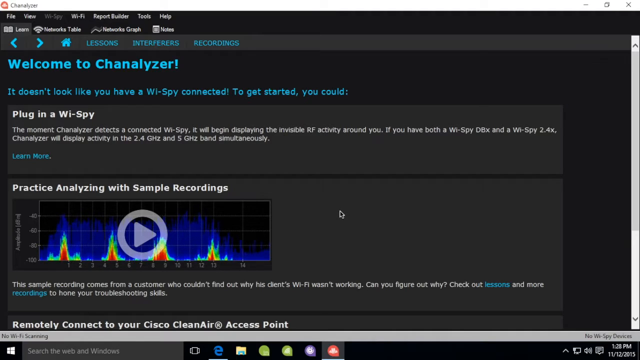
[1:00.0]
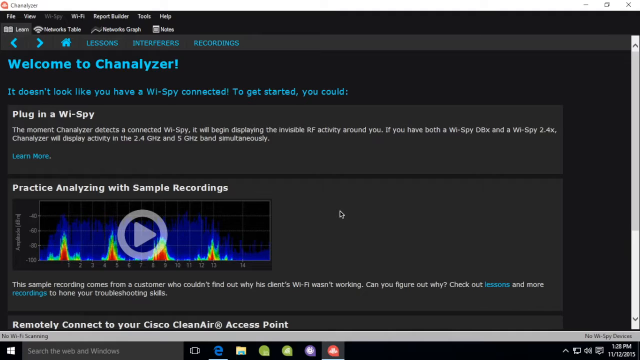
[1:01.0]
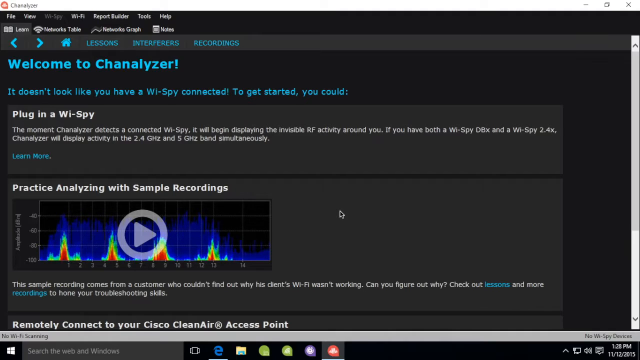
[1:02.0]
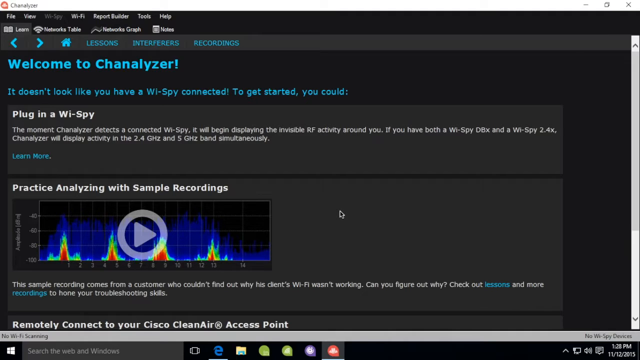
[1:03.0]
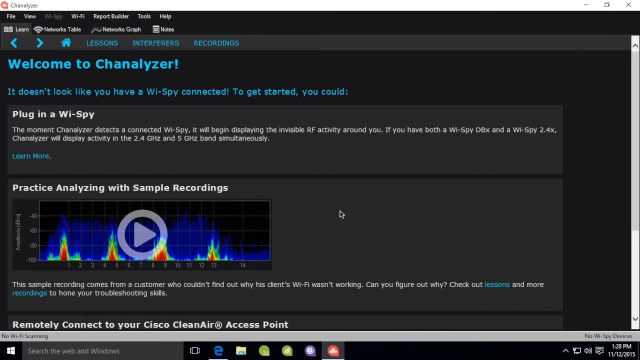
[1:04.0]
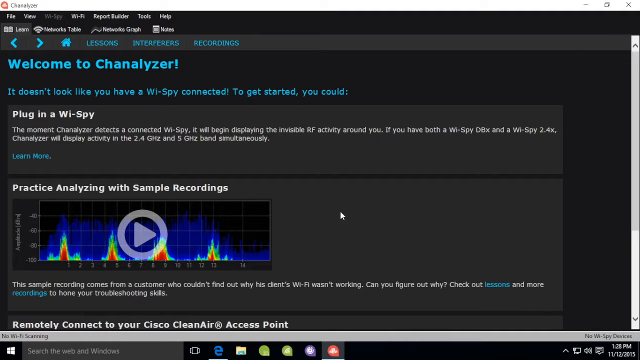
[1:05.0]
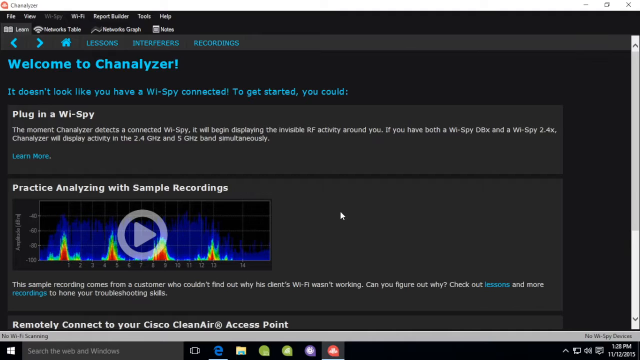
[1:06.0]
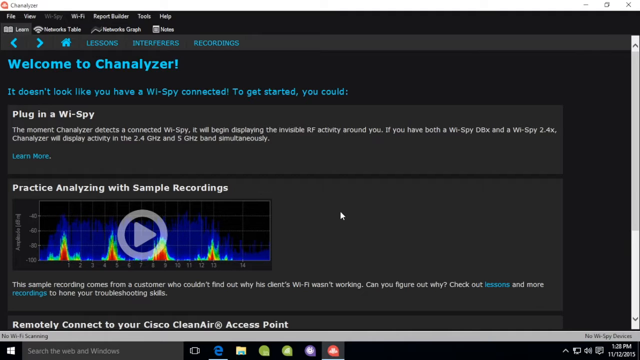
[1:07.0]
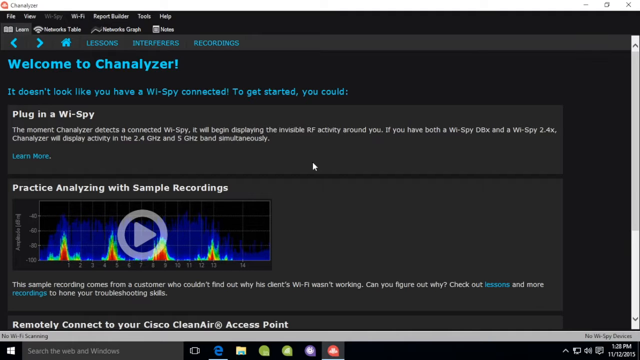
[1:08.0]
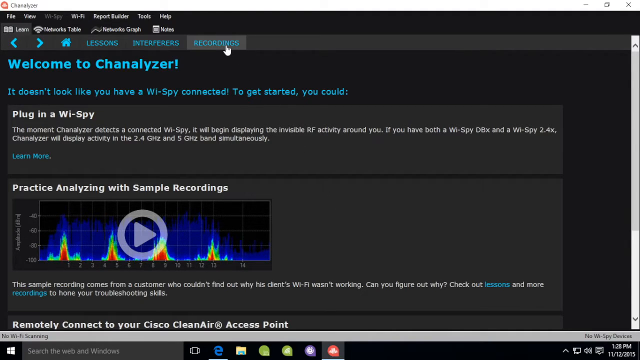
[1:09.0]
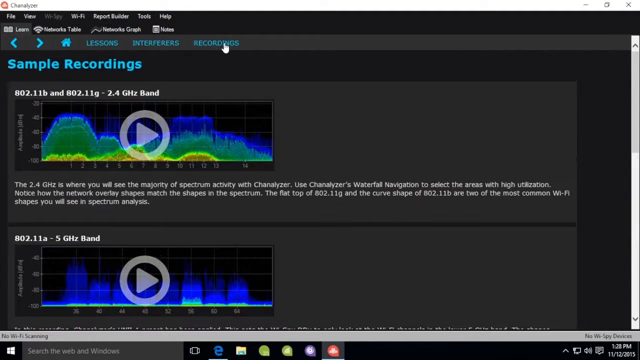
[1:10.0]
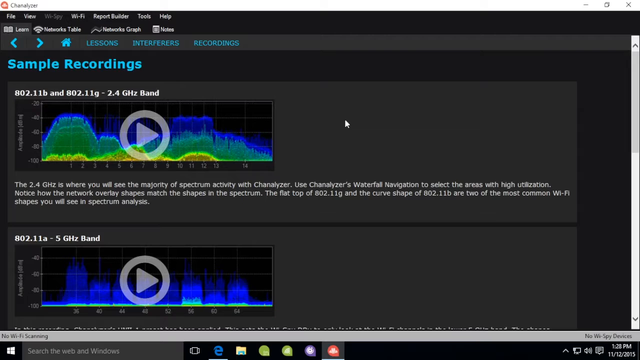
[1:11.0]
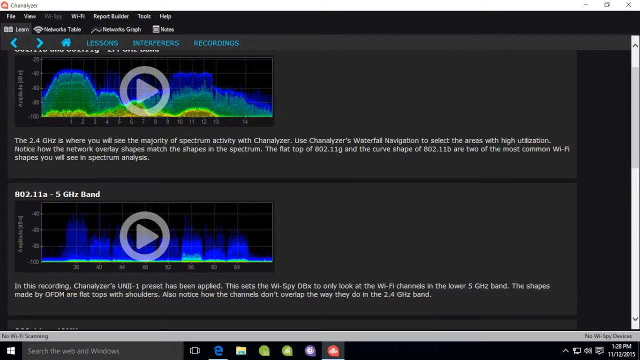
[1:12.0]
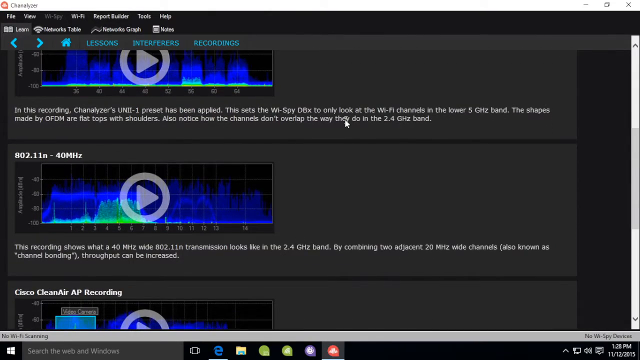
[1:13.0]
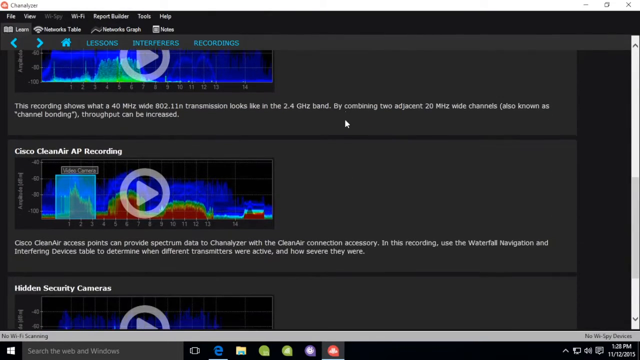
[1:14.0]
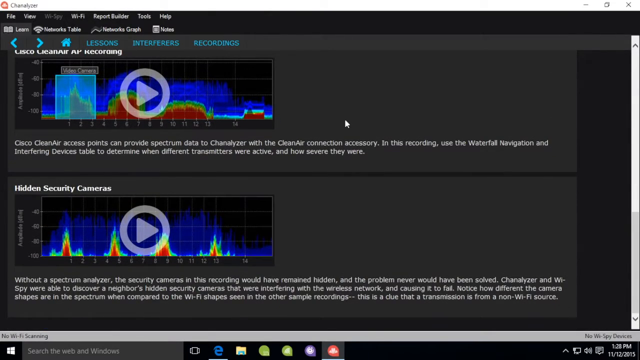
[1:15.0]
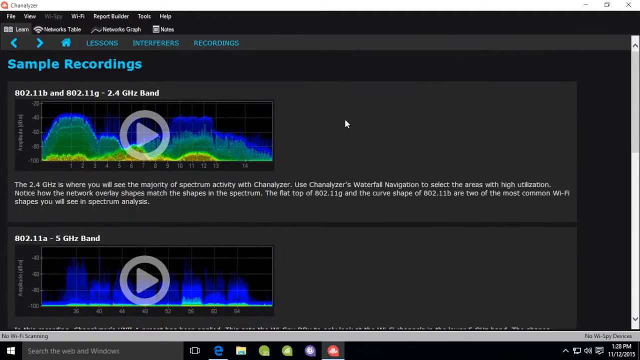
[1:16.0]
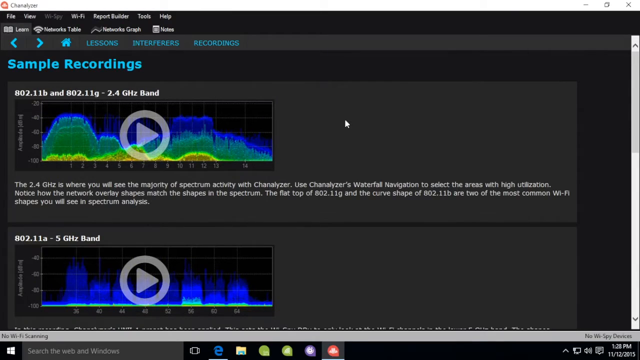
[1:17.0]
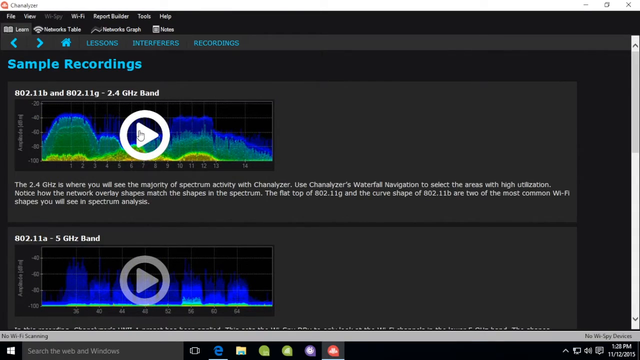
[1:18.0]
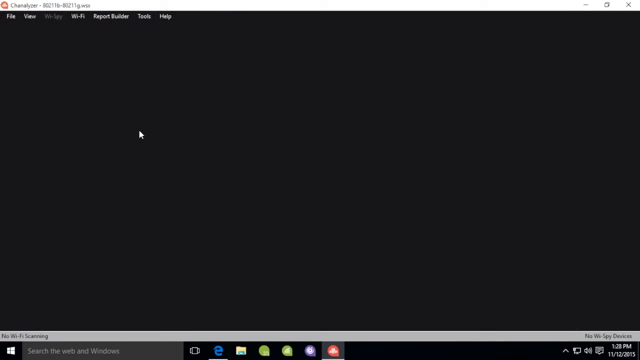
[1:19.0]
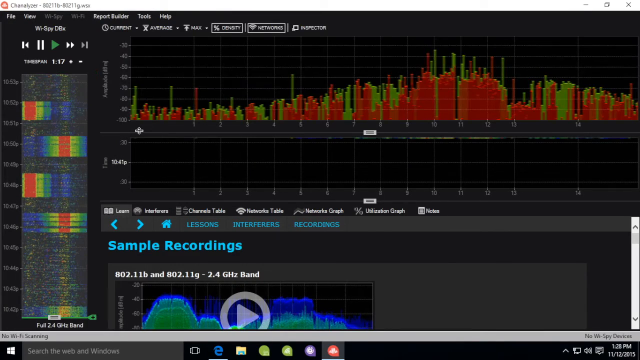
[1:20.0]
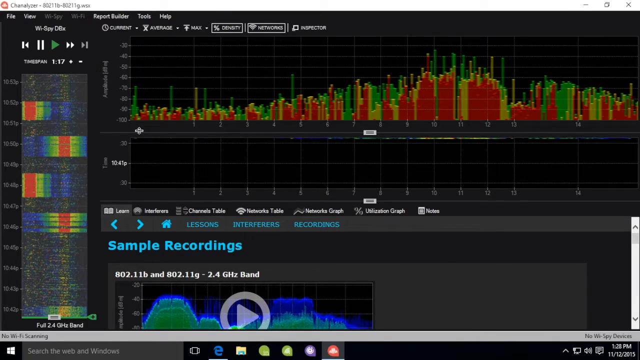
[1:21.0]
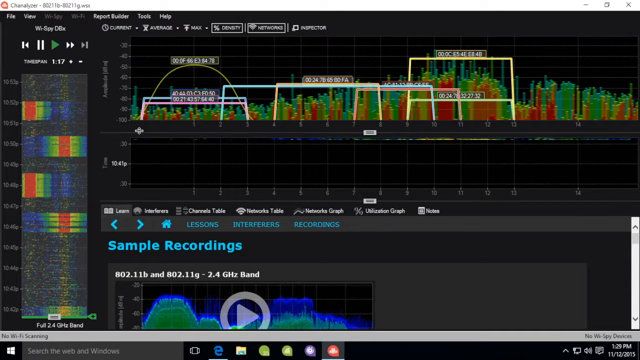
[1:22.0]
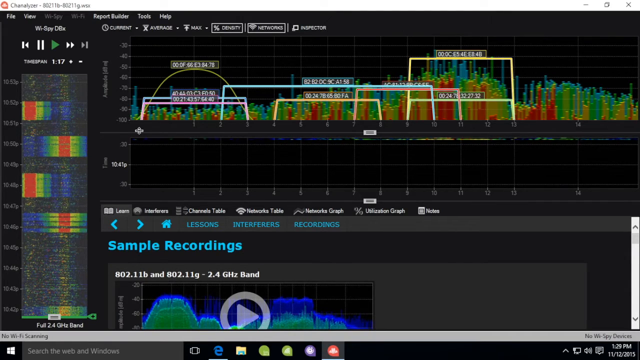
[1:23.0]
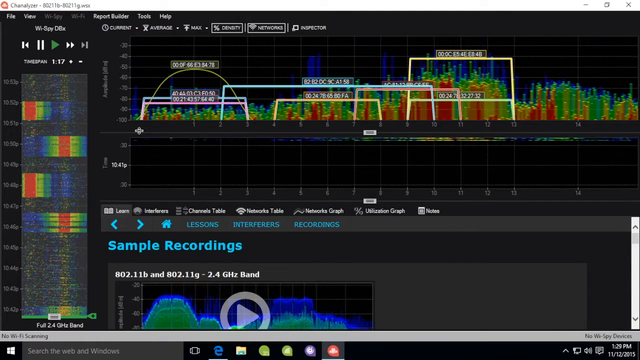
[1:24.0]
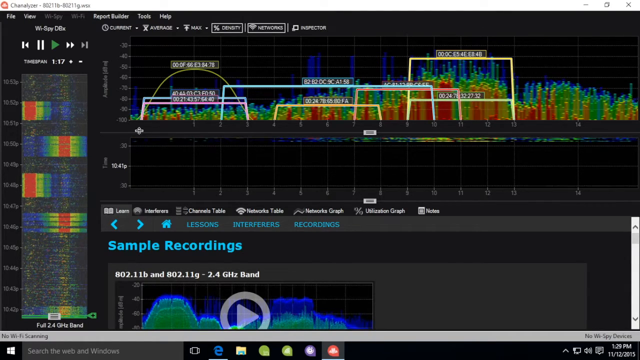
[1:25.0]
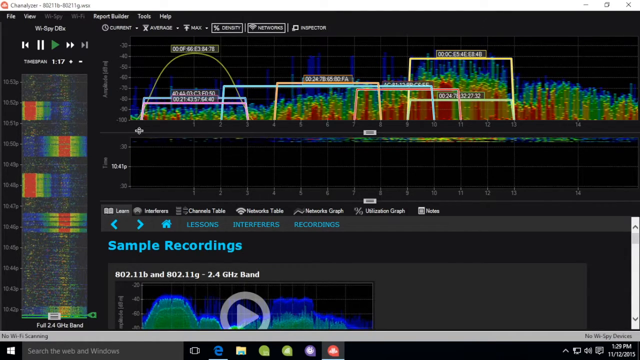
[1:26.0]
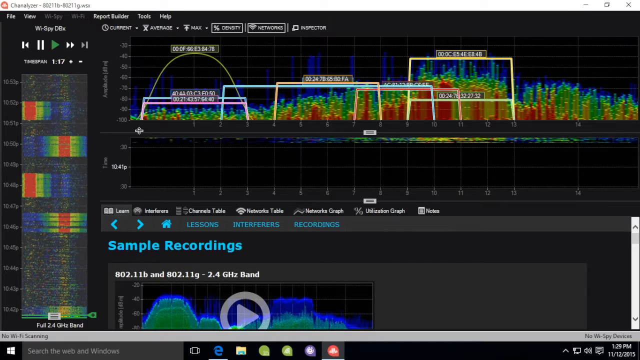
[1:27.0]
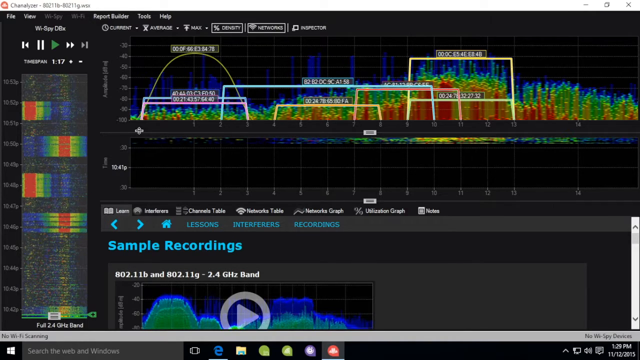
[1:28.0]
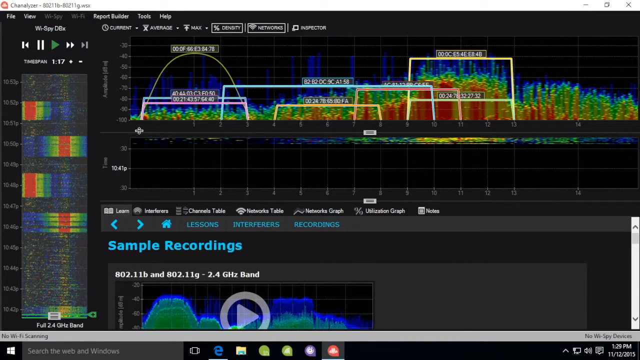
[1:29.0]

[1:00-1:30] A list of recordings is scrolled through, covering the 802.11b and 802.11g bands, and one is clicked on. The screen shows the different channels and bands the networks are on, with the active wireless networks on the 2.4GHz frequency band and detailed analytics.